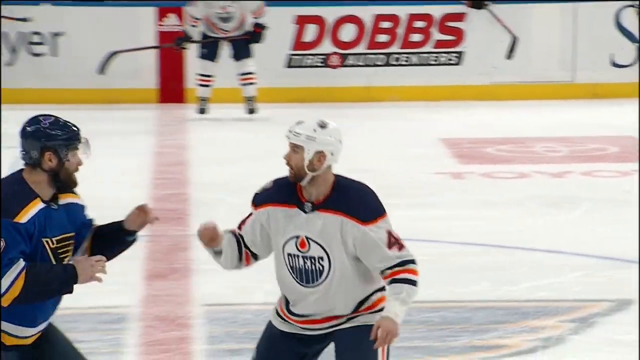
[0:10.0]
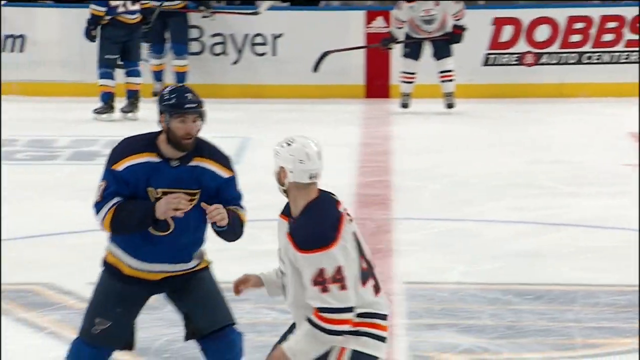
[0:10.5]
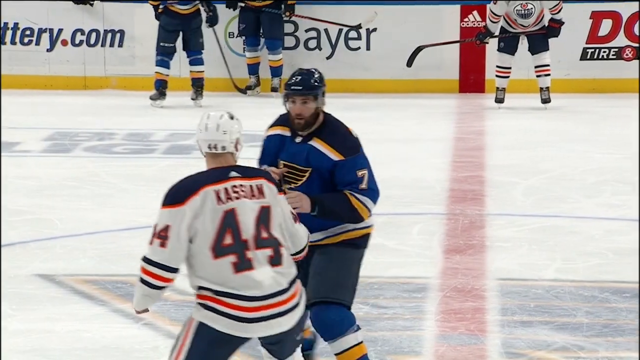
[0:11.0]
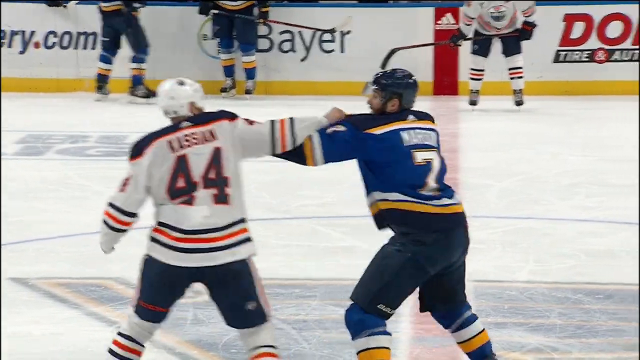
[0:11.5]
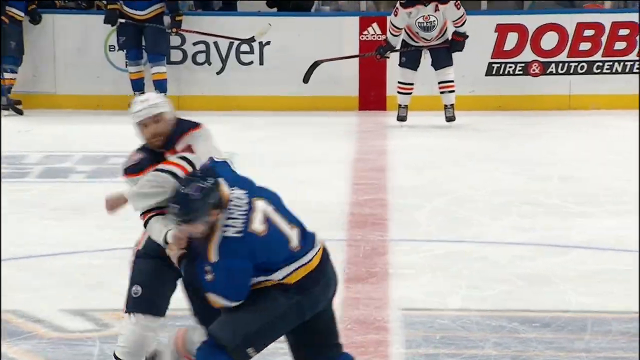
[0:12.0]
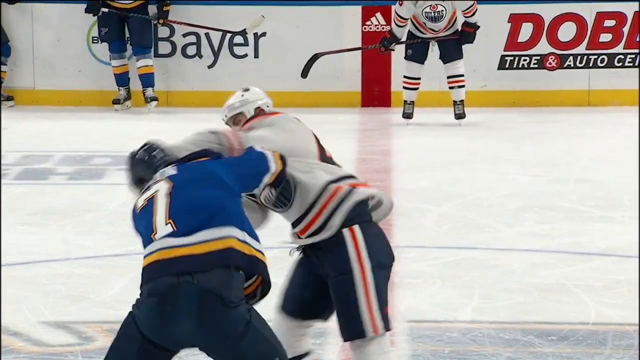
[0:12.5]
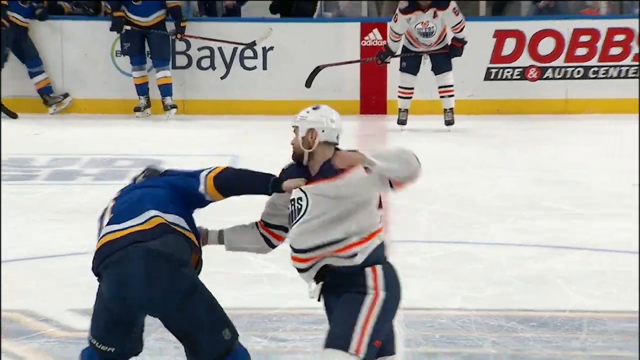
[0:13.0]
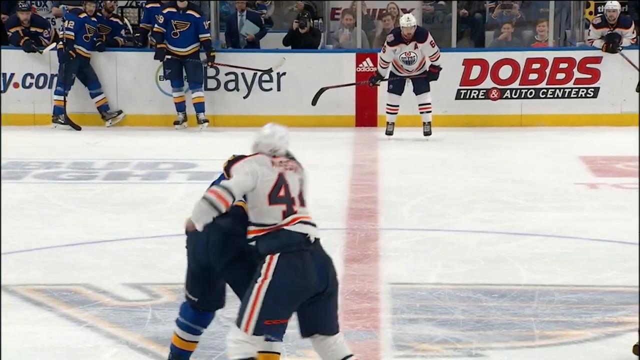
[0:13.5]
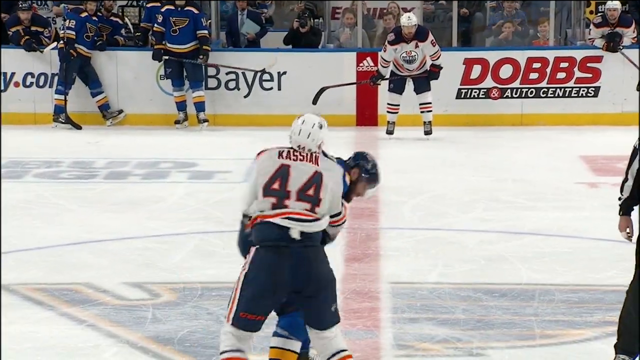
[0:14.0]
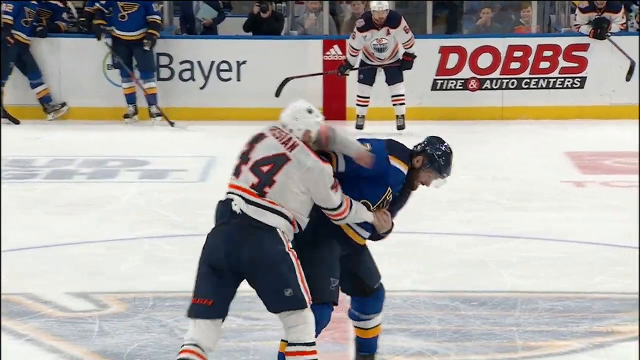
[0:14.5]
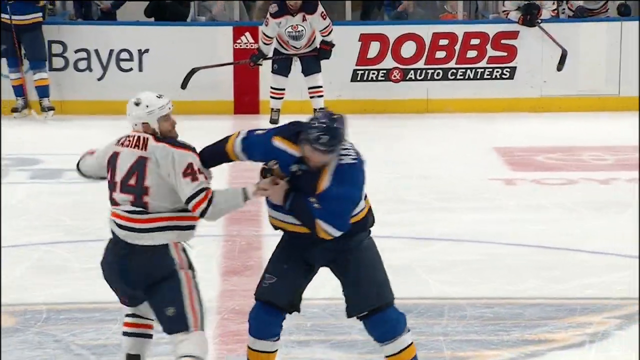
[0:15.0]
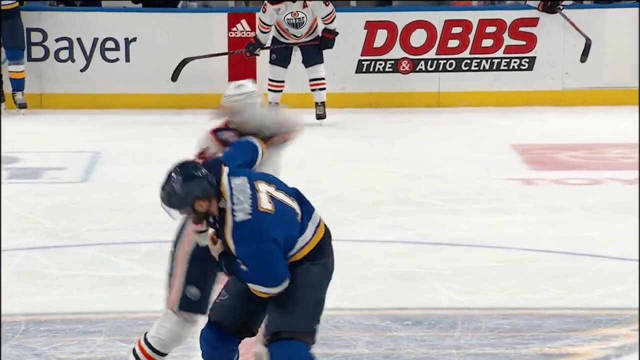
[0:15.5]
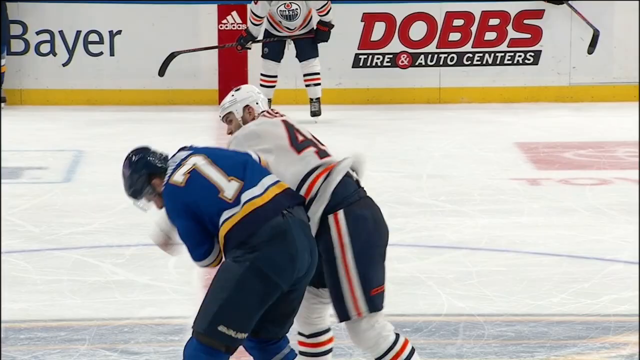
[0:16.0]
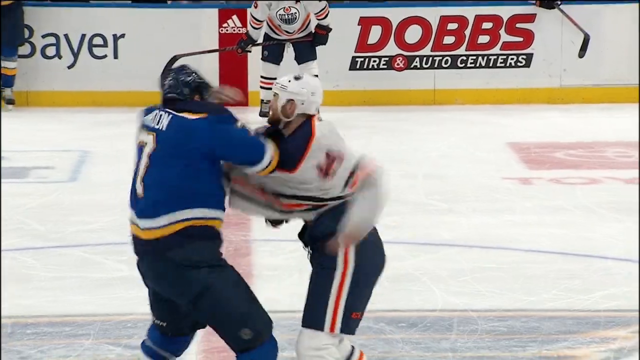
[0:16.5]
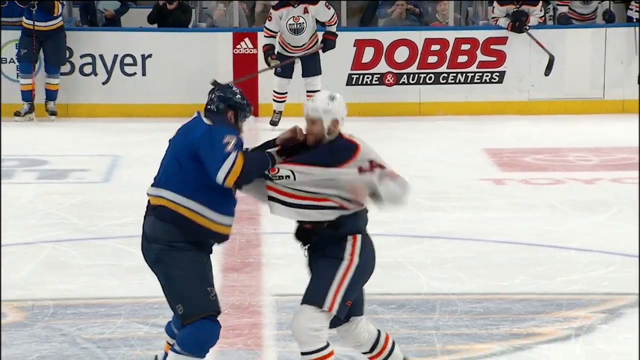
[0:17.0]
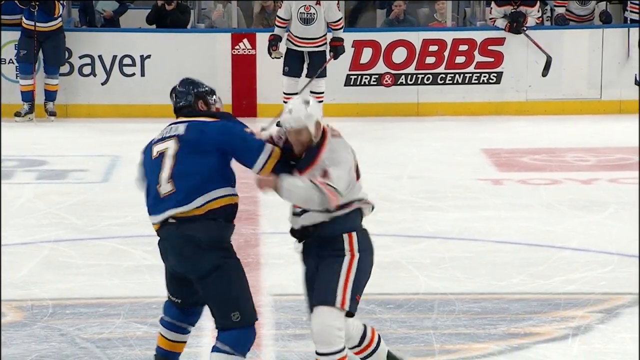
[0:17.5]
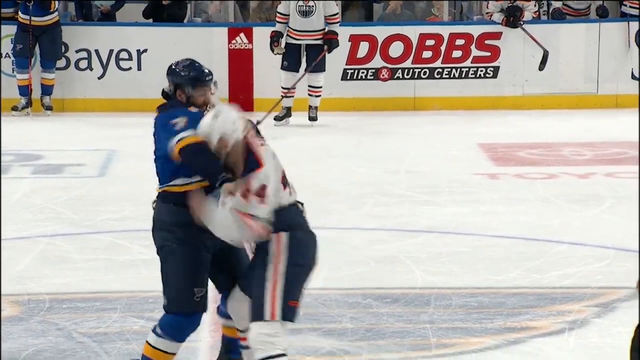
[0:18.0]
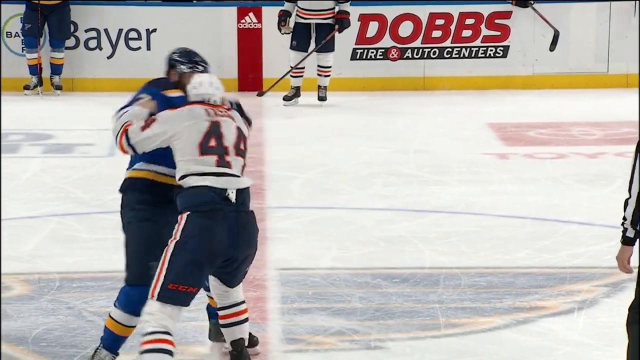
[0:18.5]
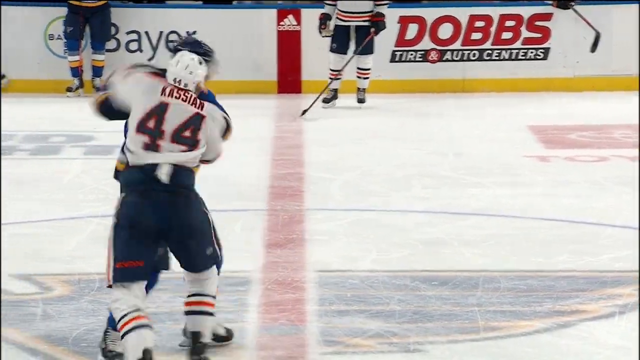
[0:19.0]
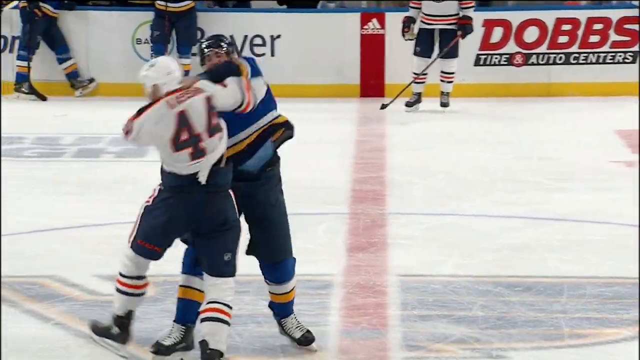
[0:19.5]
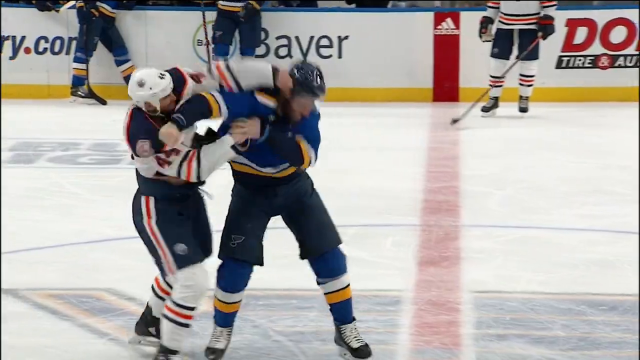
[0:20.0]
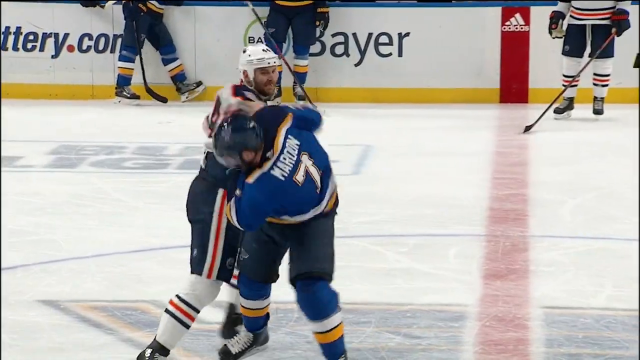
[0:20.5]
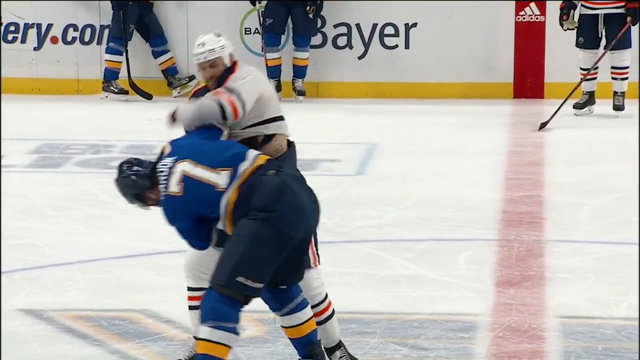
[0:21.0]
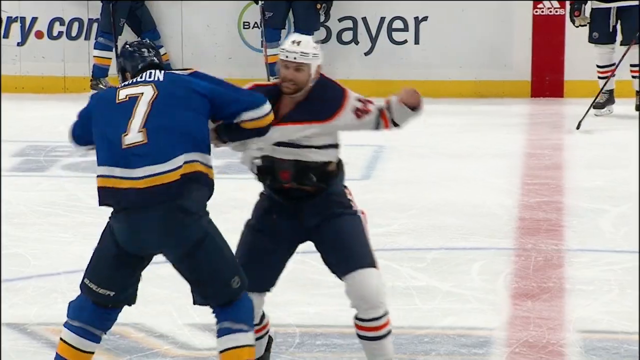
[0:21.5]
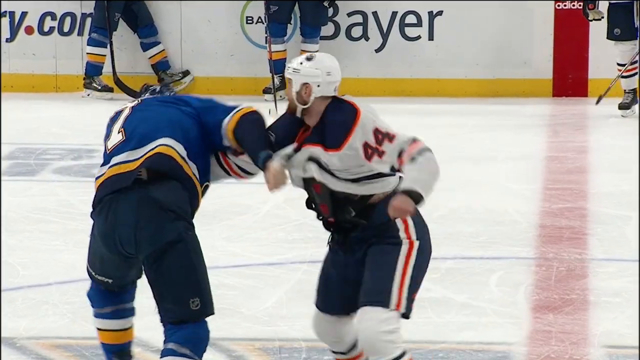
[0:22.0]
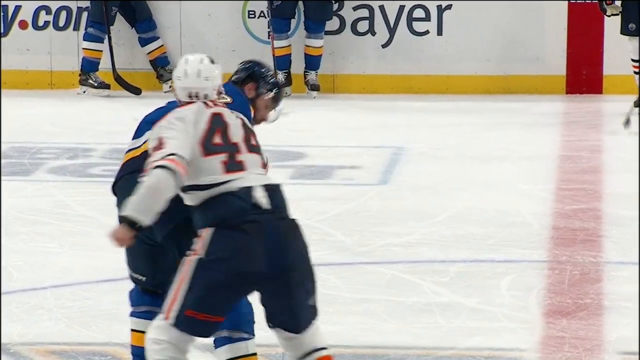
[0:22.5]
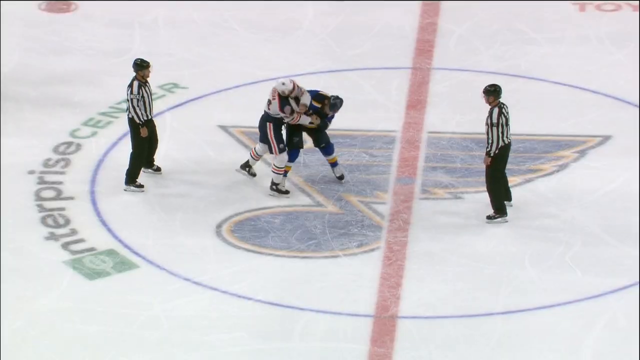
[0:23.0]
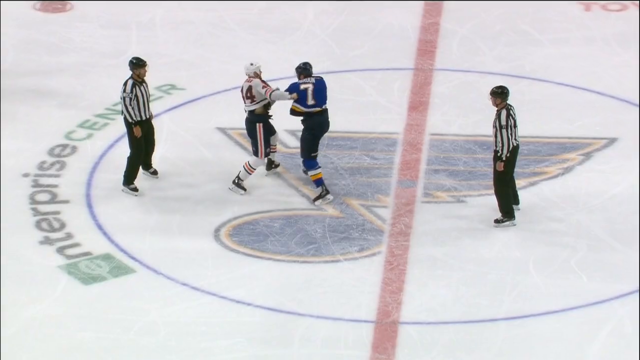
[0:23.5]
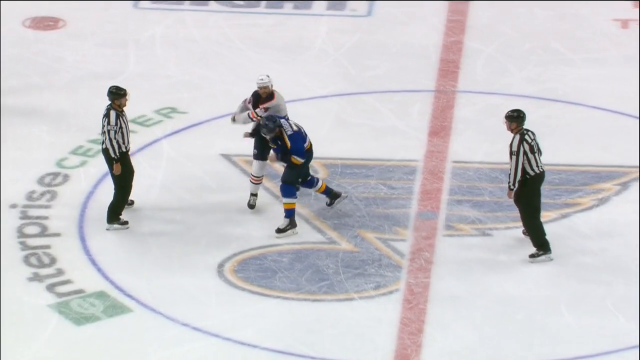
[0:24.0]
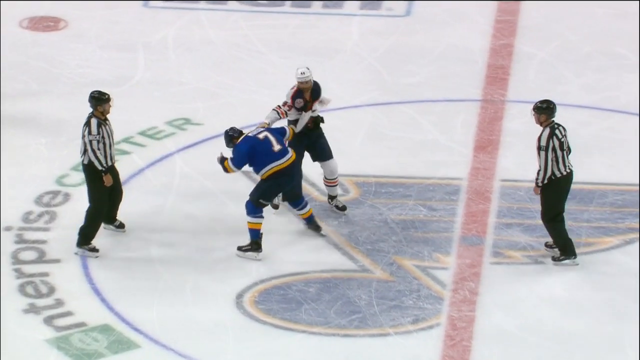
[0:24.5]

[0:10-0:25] The two skaters push at each other, and then they start fighting. Kassian throws punches at Maroon, and then Maroon throws punches at Kassian. They both hold each other in the center of the rink, standing at center ice right on the St. Louis Blues logo. There are two referees on each side to keep the fighters in check. Kassian is number 44 in the white jersey of the Edmonton Oilers, and Patrick Maroon is number 7 of the St. Louis Blues. Other players look bored and stand around the outsides of the rink, around the boards. Advertising is written on the boards, with advertisers including Bud Light, Dobbs Tire and Auto, Bayer and Toyota. The event takes place in the Enterprise Center, in the middle of the rink.